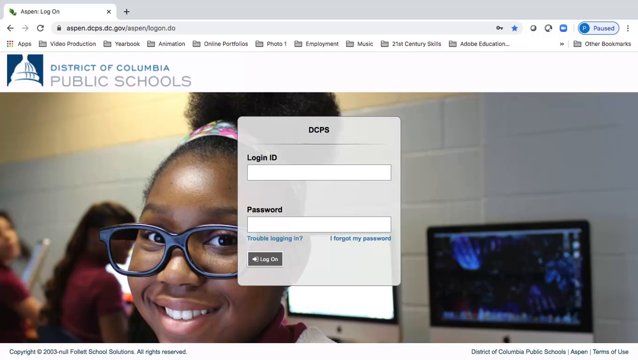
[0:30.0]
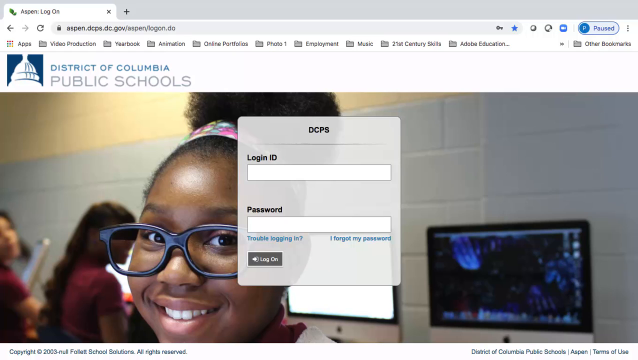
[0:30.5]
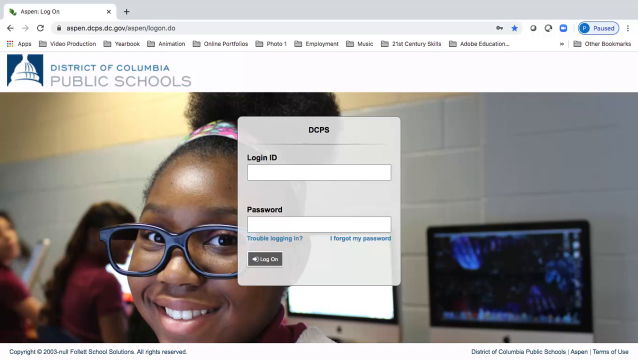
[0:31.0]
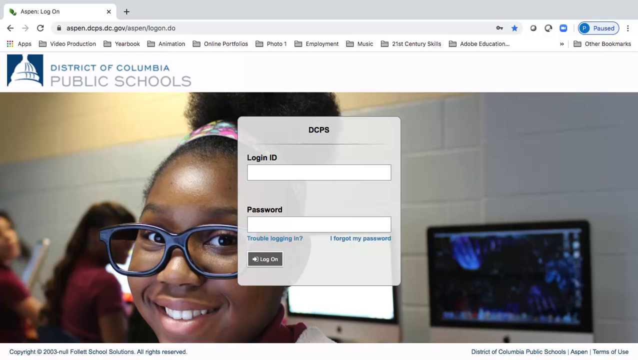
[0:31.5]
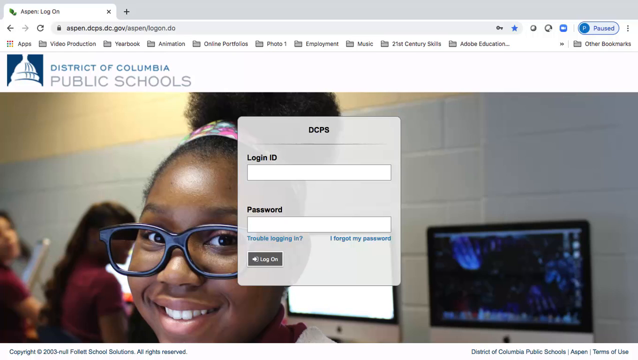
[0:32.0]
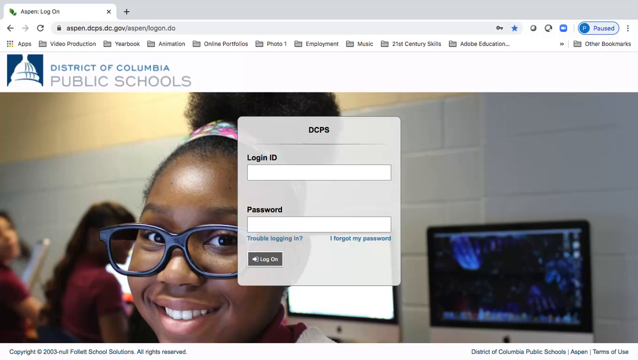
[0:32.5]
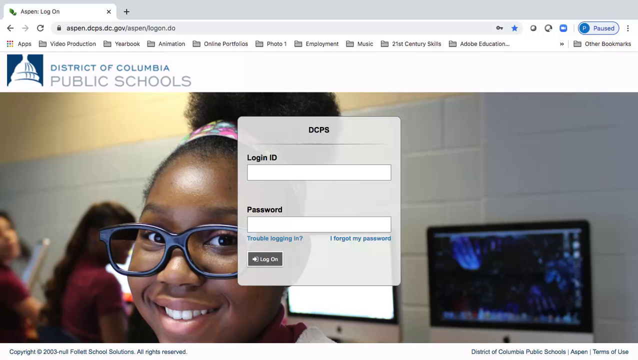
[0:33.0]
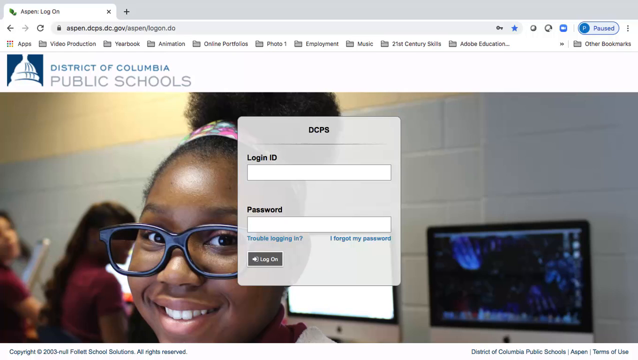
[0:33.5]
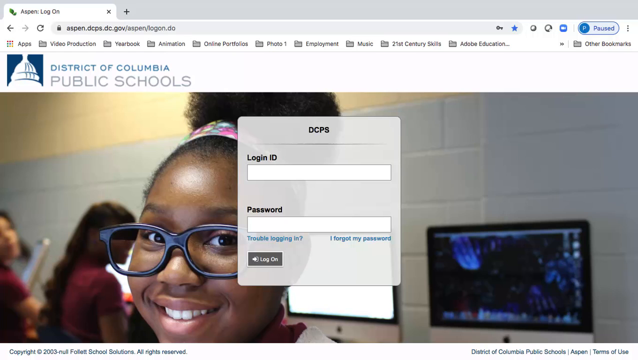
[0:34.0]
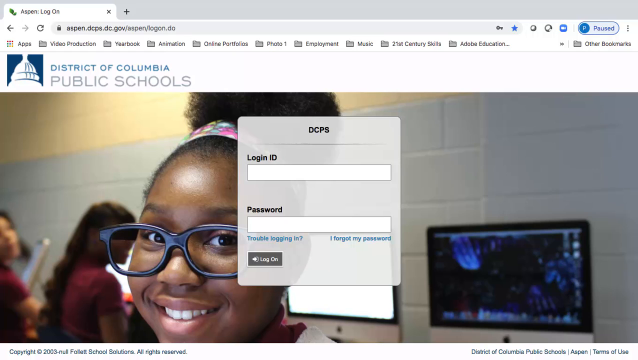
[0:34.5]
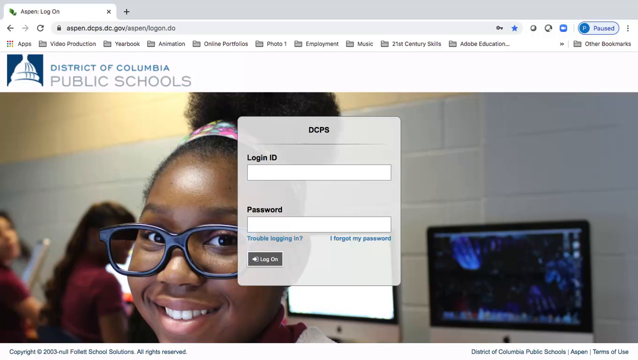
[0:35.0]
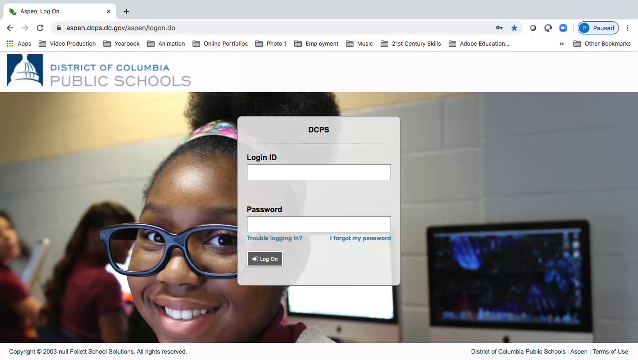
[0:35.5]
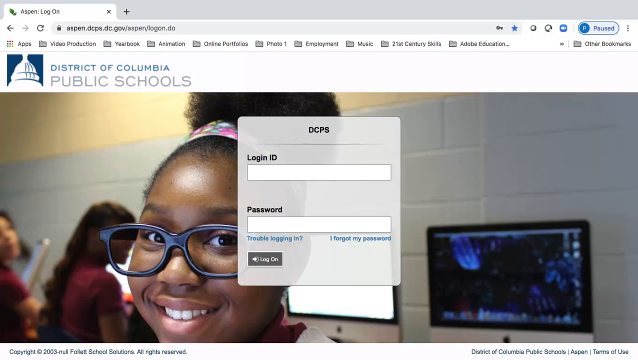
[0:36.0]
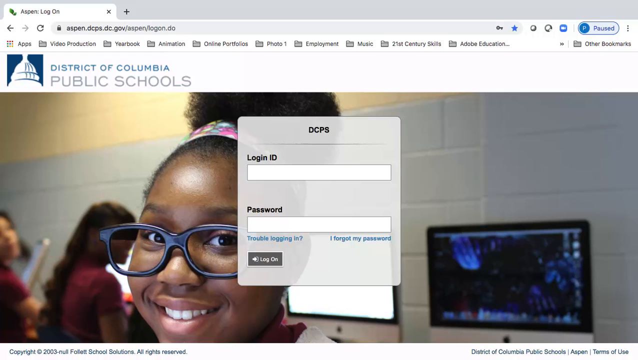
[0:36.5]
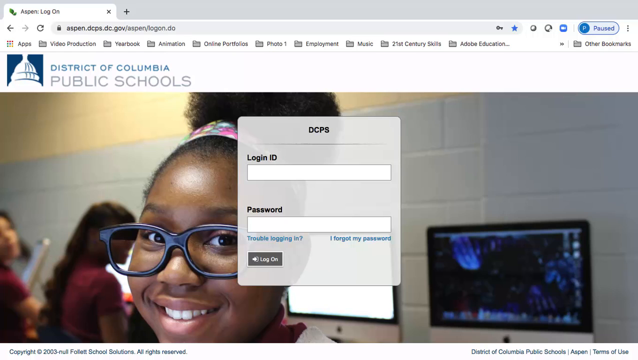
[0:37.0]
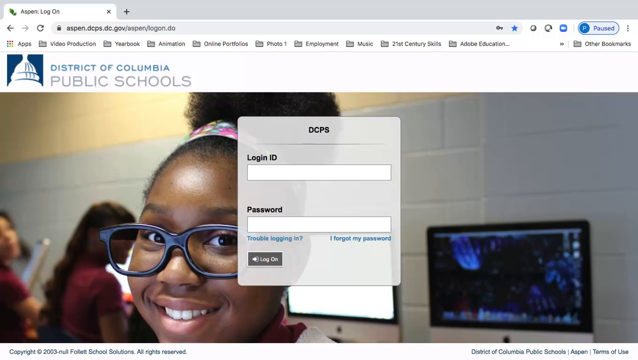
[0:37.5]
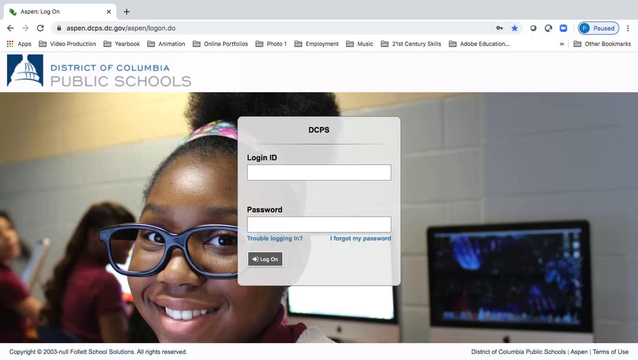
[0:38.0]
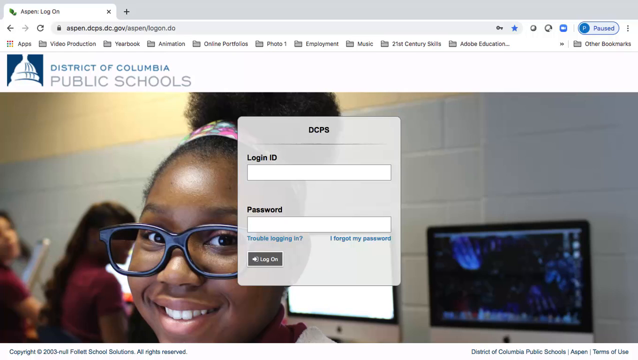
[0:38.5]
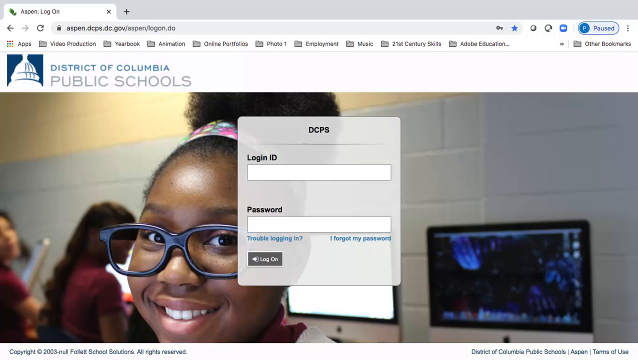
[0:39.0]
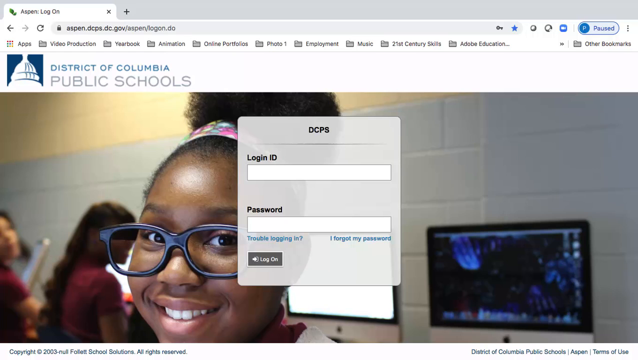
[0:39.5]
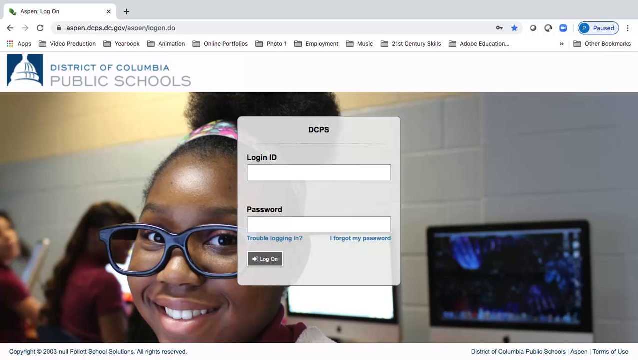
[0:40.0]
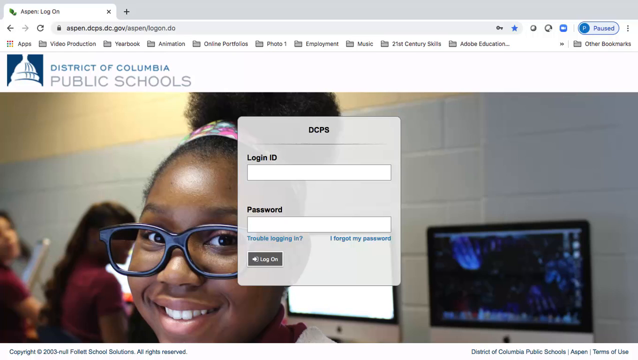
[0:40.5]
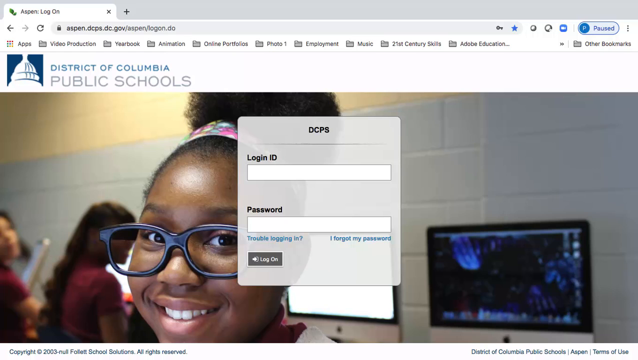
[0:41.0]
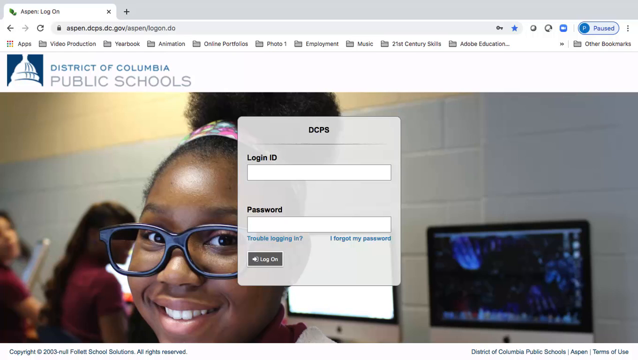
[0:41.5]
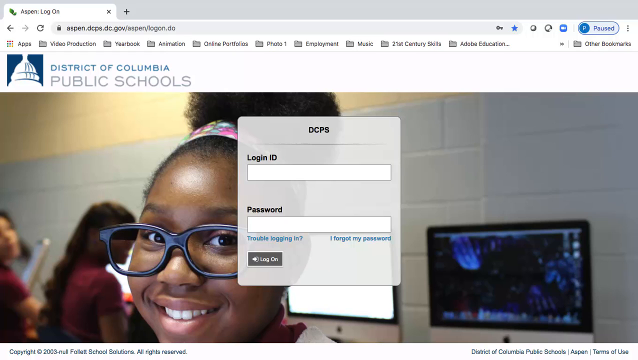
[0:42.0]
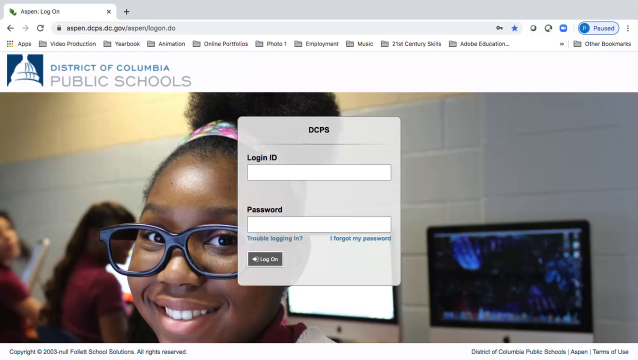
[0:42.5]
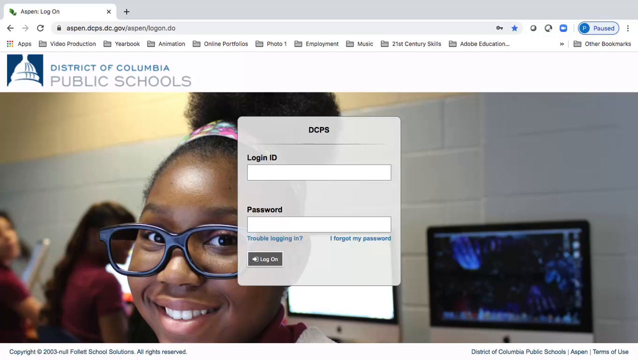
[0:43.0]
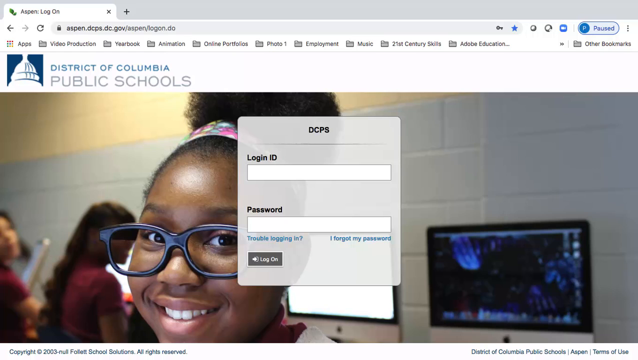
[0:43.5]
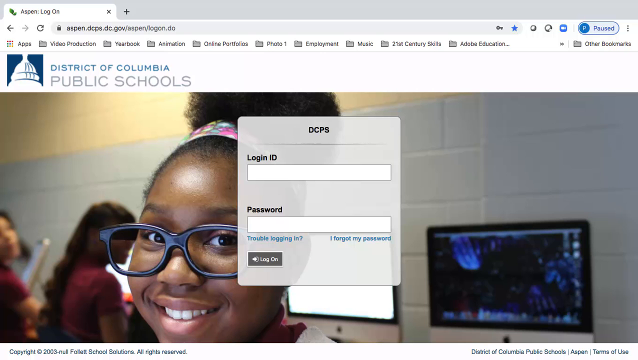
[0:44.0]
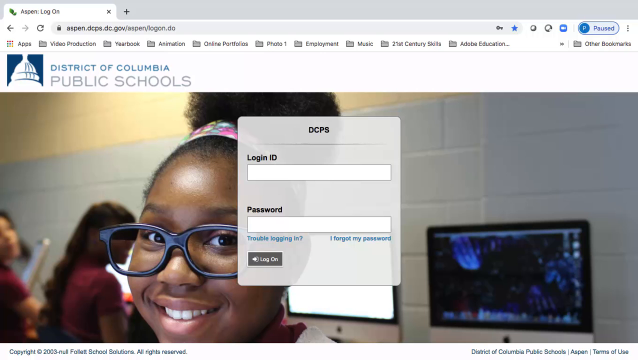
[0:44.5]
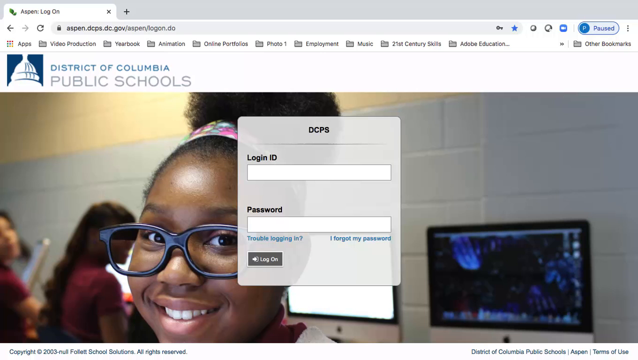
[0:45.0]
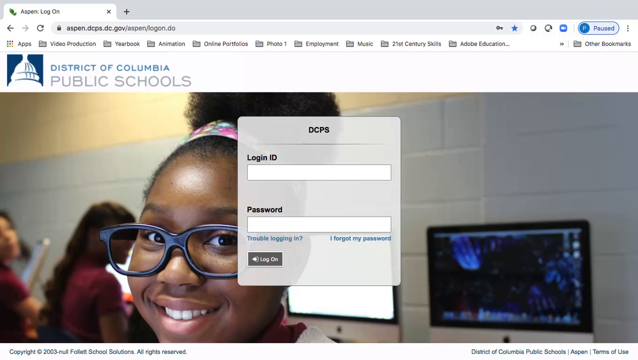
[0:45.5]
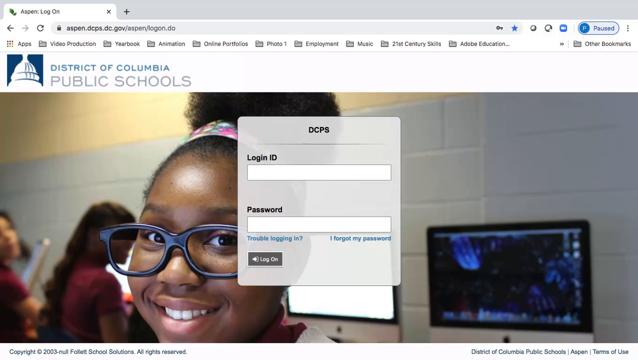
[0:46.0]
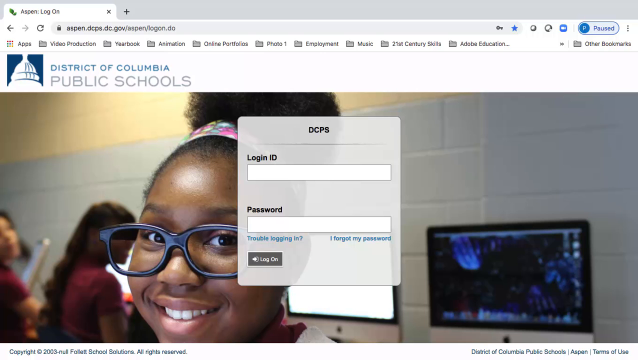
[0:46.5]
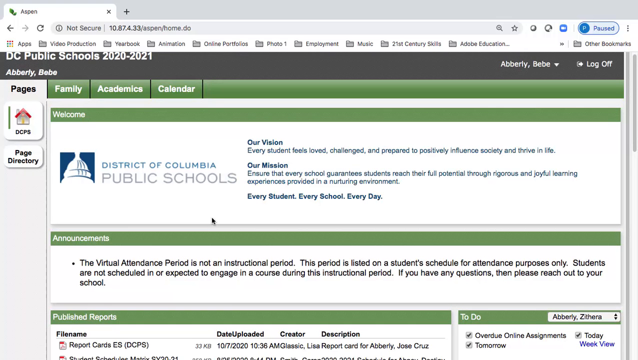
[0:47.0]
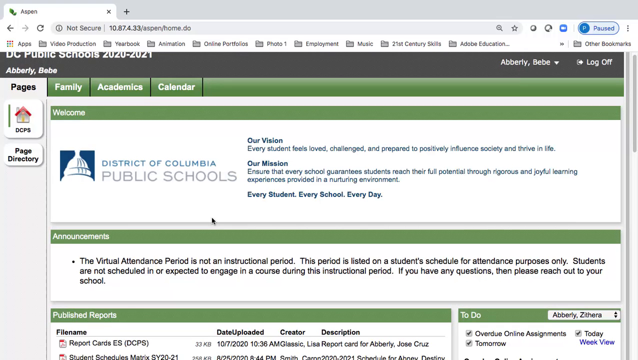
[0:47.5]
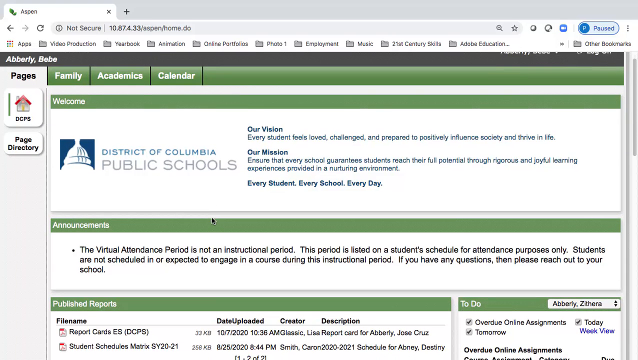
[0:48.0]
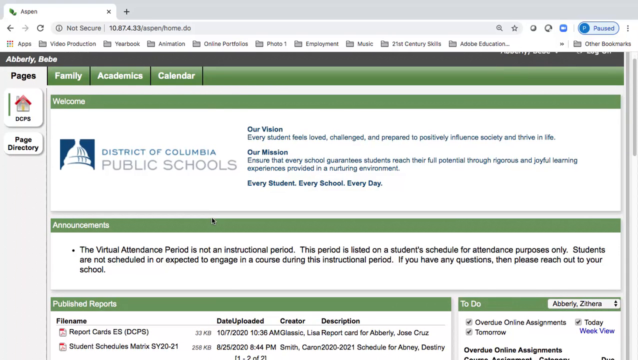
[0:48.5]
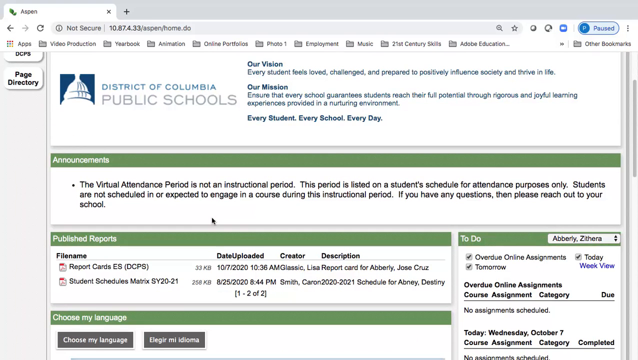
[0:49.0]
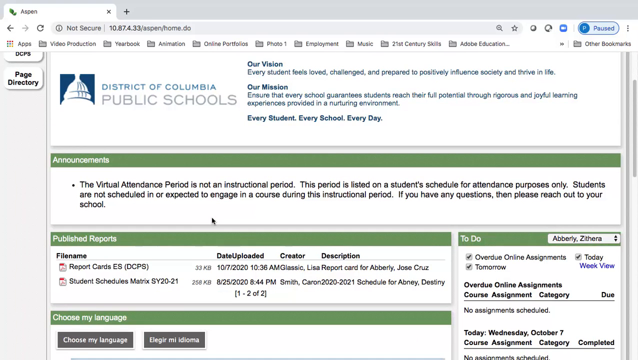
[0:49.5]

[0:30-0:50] The browser is on aspen.dcps.dc.gov/aspen/login, a login screen for DCPS. In the middle is a gray box within a transparent box with login and password fields and the options "Trouble logging in" and "I forgot my password." The background has a prominent picture of an African American girl with black-rimmed glasses that don't seem to have lenses. To her left are two other girls, seemingly African American, in purple-maroon shirts, and to her right are two computer screens, one white and the other showing a black desktop view. The page stays for about 17 seconds with little movement. It then changes to a homepage reading "DC Public Schools 2020-2021," logged in for Bay Bay Aberle. The page has a welcome section and an announcements section, both with green banners. On the left is a directory labeled "DCPS," with one labeled "page directory" below it. There are four tabs in total: pages, family, academics, and calendar. The page shows the school's vision and mission, and the announcement is about the virtual attendance period not being an instructional period.